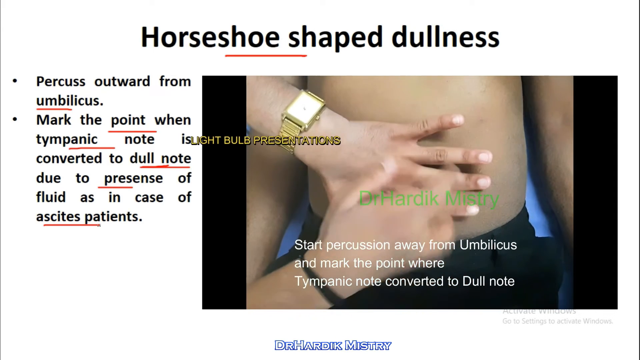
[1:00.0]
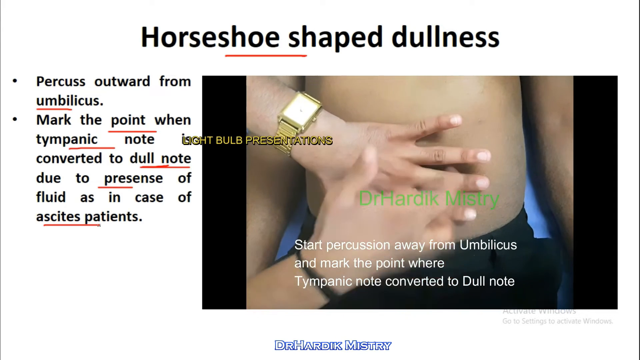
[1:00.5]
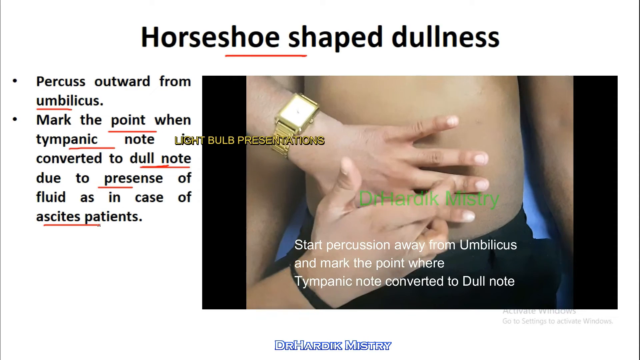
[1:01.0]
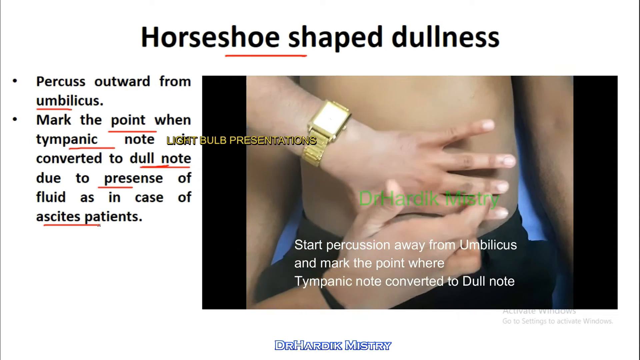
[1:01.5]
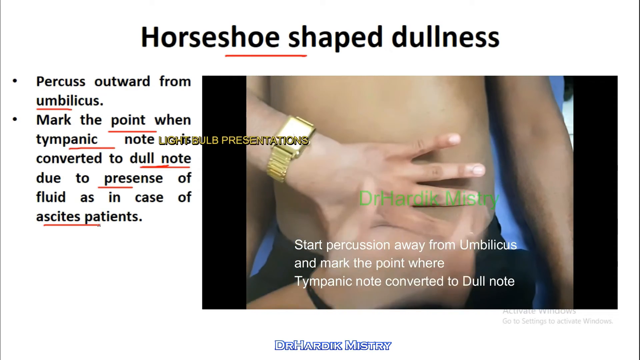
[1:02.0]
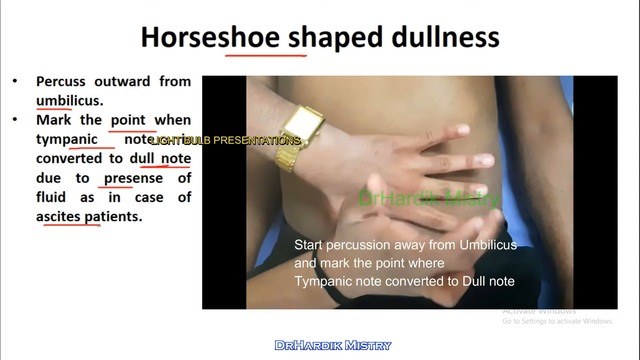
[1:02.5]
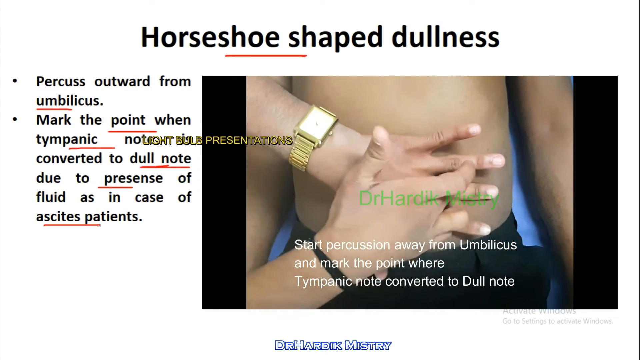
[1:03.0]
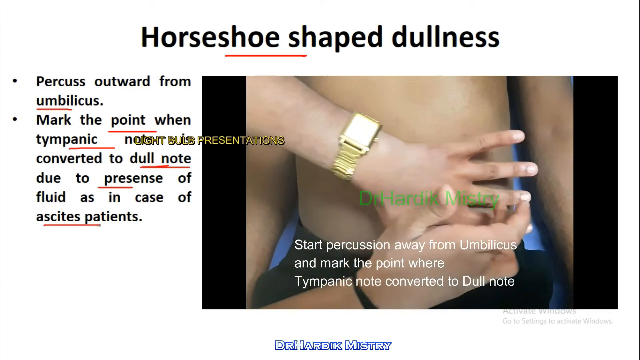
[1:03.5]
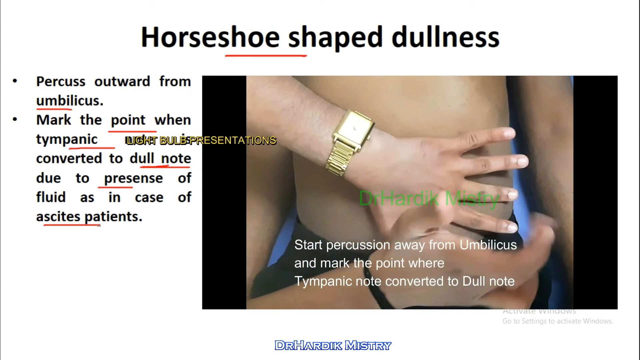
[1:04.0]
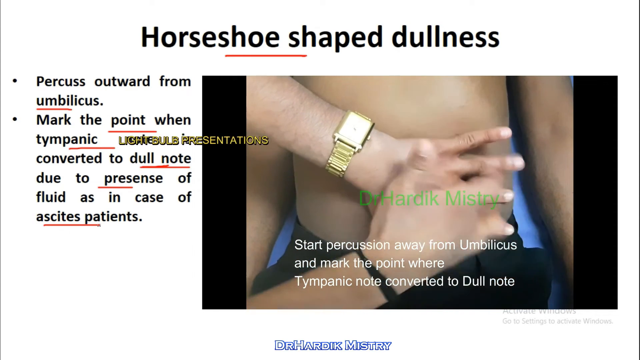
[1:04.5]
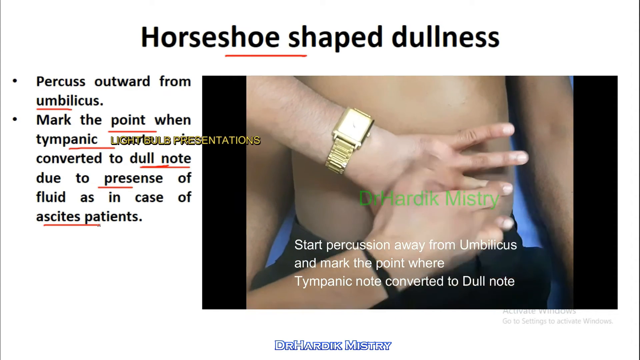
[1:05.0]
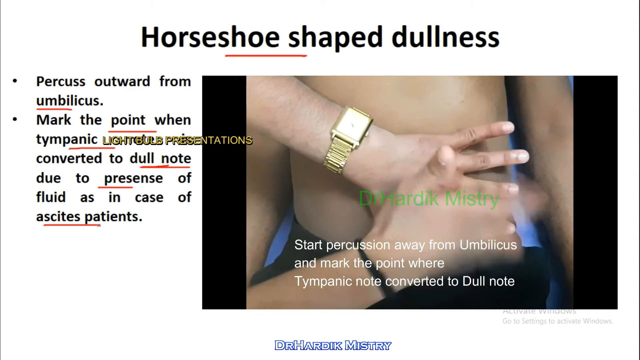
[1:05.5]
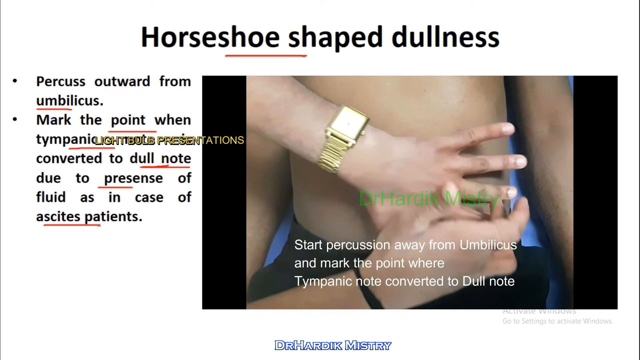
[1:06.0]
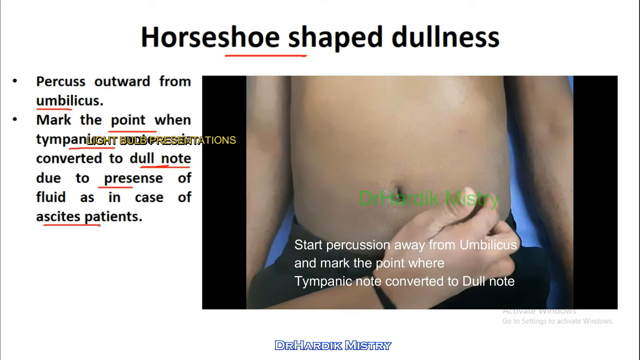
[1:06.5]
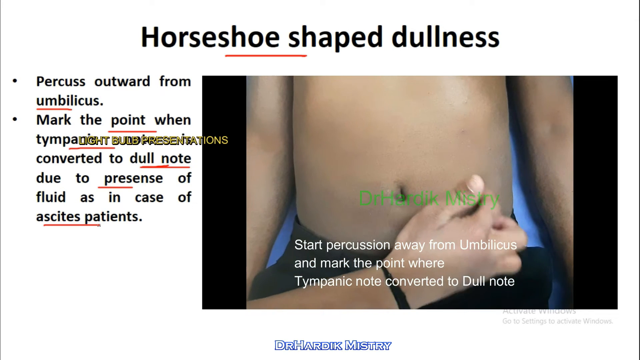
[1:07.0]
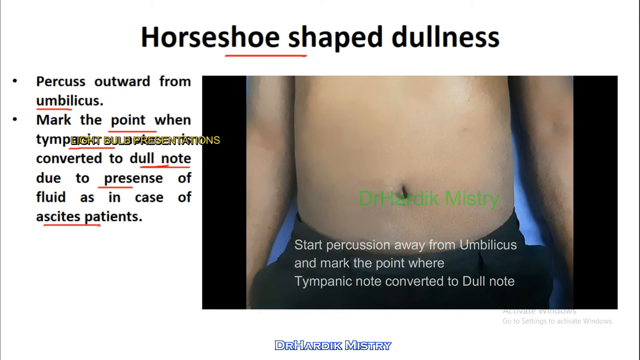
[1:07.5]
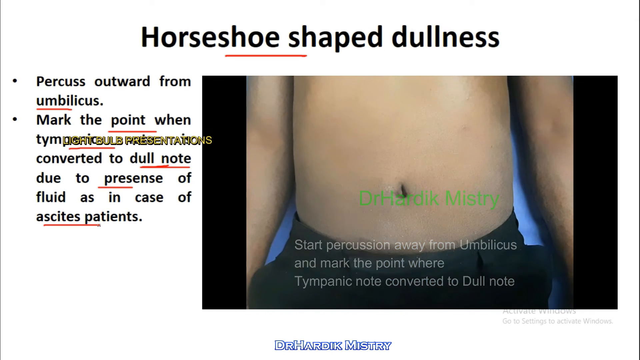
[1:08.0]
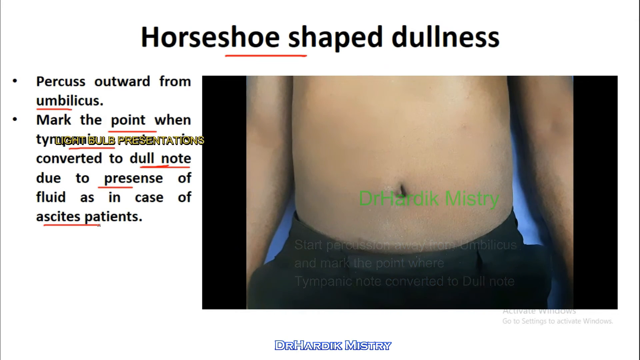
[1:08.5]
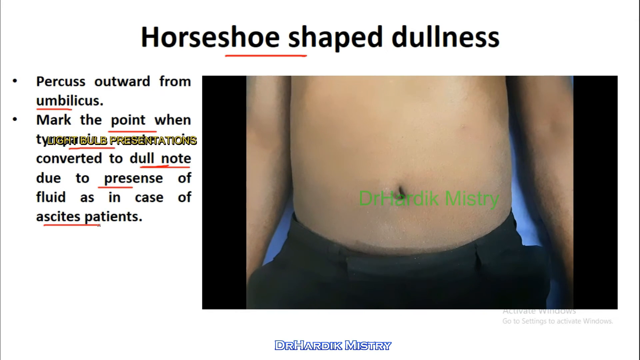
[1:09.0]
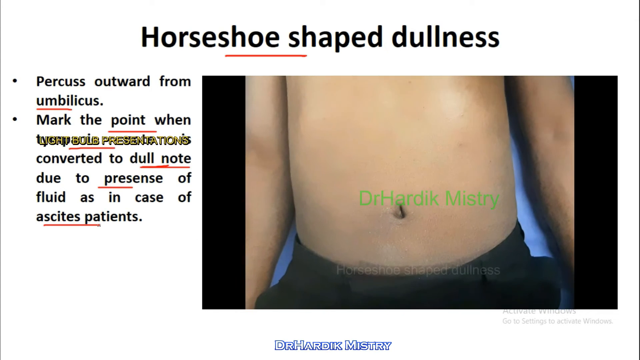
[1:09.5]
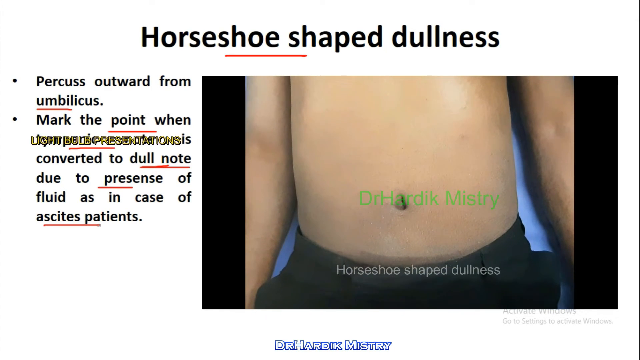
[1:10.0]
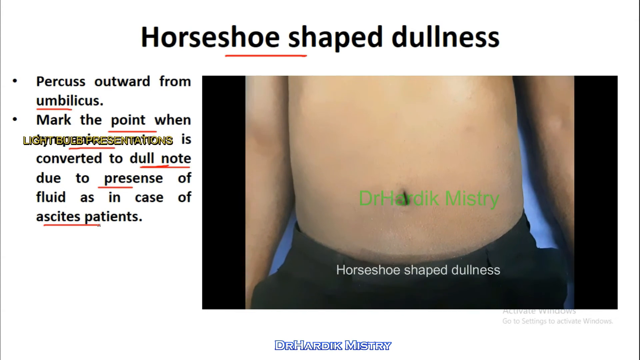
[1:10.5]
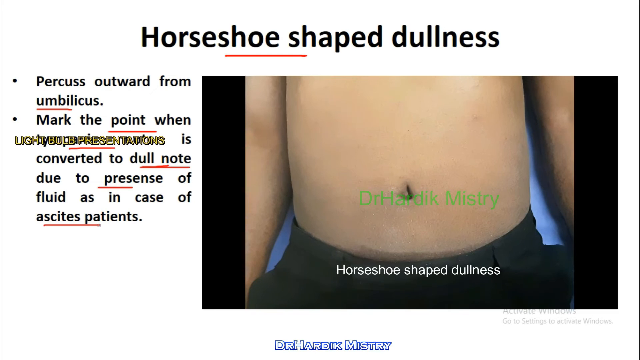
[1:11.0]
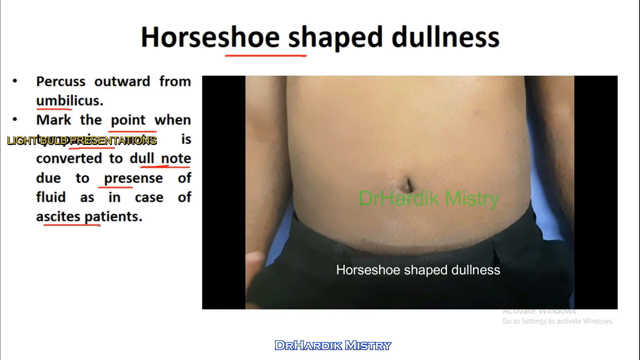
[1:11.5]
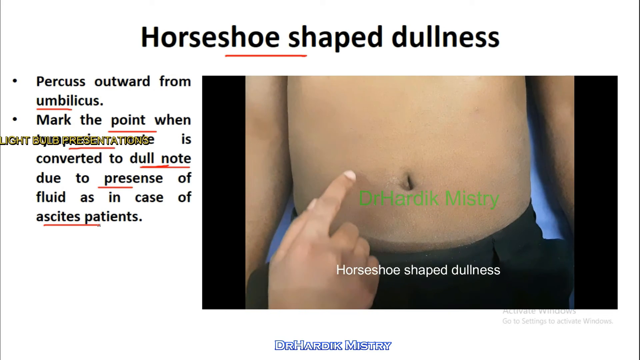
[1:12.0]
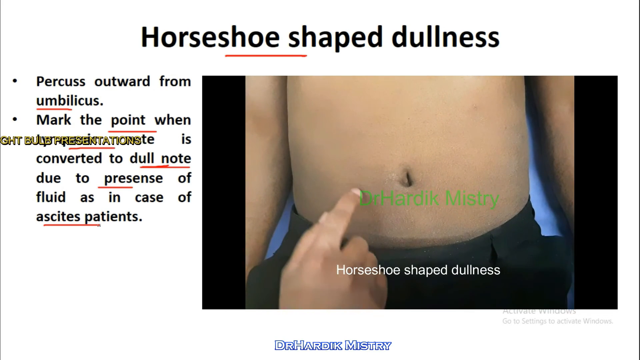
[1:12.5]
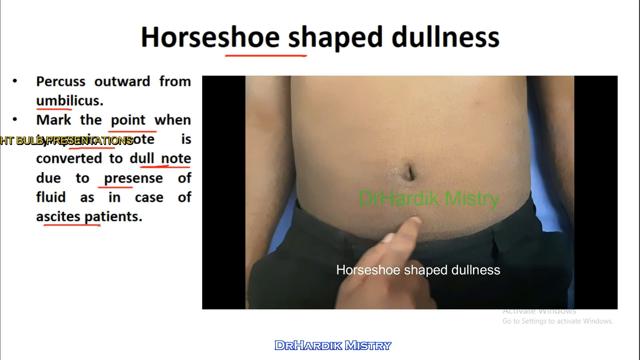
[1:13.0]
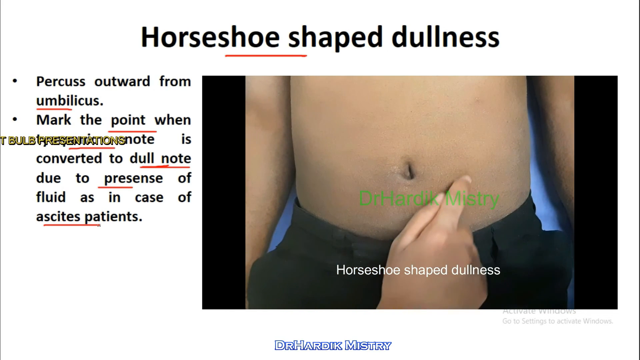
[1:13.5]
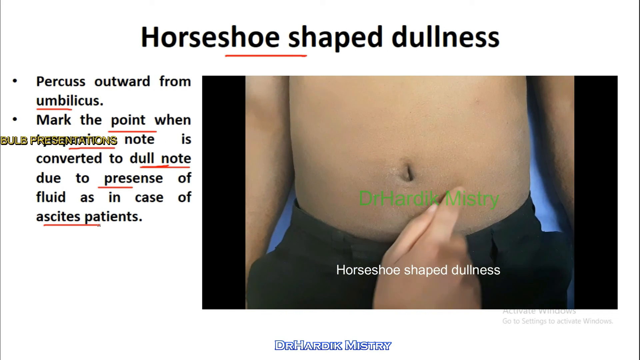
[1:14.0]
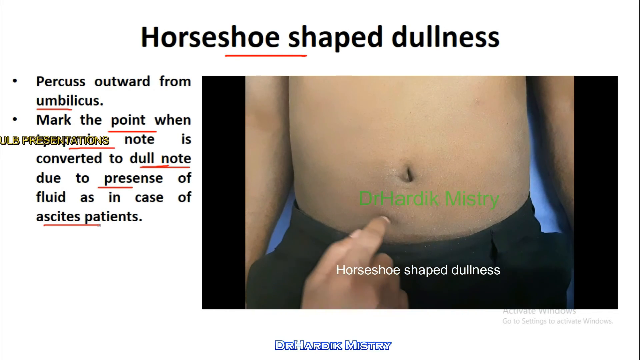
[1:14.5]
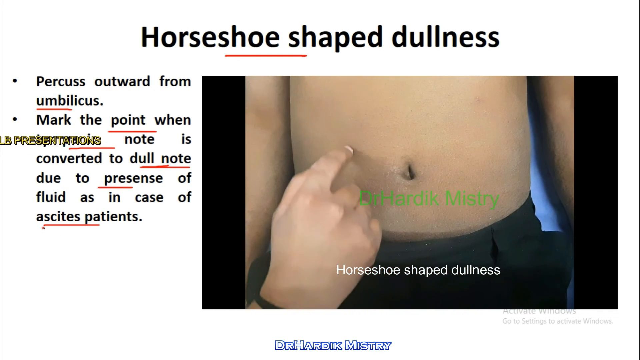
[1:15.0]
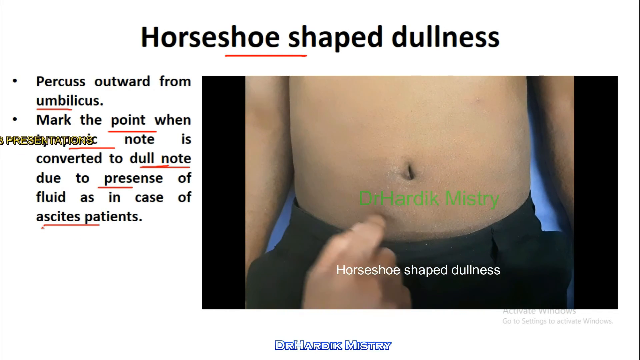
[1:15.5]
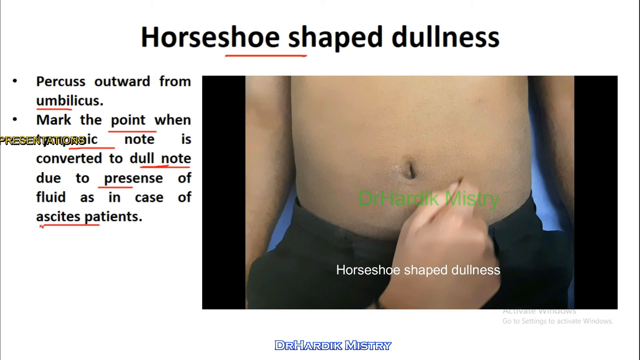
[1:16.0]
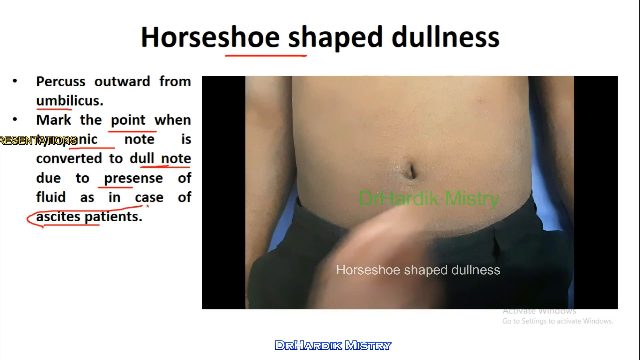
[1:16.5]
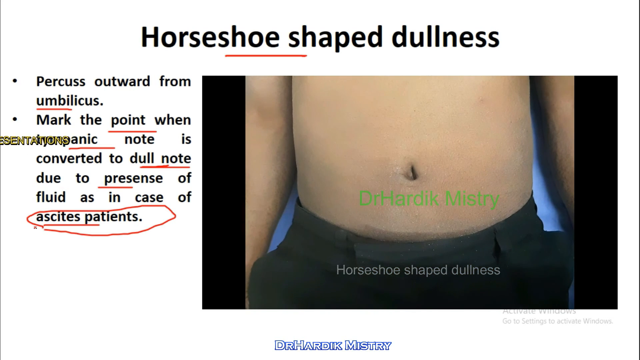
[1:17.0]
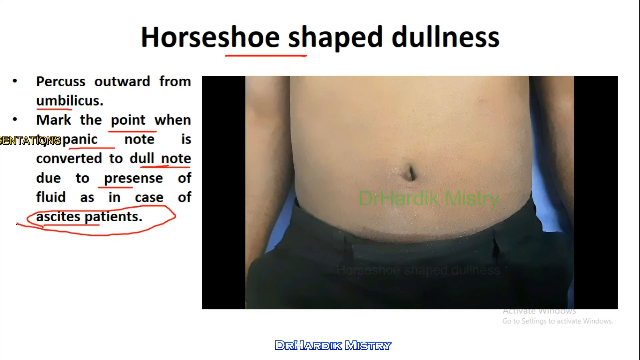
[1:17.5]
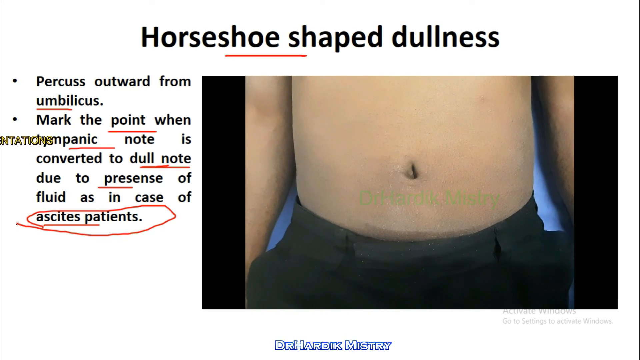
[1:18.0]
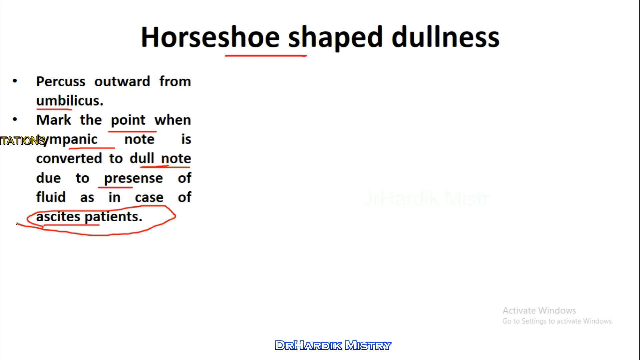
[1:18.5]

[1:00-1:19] At the top of the screen, black lettering against white reads "horseshoe-shaped dullness." On the left-hand side are two bullet points: the first reads "percusses outward from umbilicus," and the second reads "mark the point when tympanic note converted to dull note due to presence of fluid, as in the case of ascites patient." In the bullet points, the words "umbilicus," "point," "tympanic note," "dull note," "presence," and "ascites patients" are all underlined in red. On the right-hand side of the screen, an inset shows a patient lying down on a blue table. A doctor wearing a gold wristwatch spreads his left hand across the patient's stomach and taps on it with his right hand. He then removes his left hand and points to places on the patient's stomach where the sound has changed. Next, with his right hand, he begins on the right-hand side of the patient's stomach next to the umbilicus and, with his index finger, describes a horseshoe-shaped semicircle moving from right to left. At that point, the words "ascites patients" on the left are circled in red. White lettering below reads "start percussus away from umbilicus and mark the point when tympanic note converted to dull note."